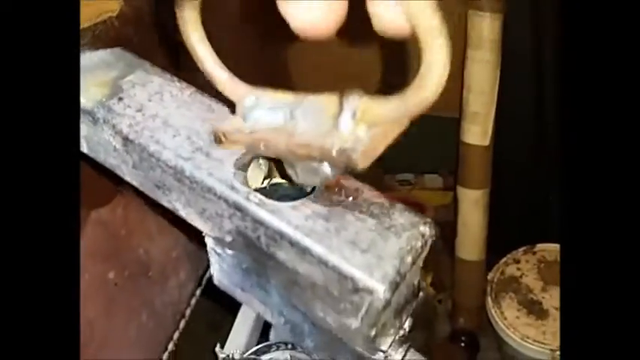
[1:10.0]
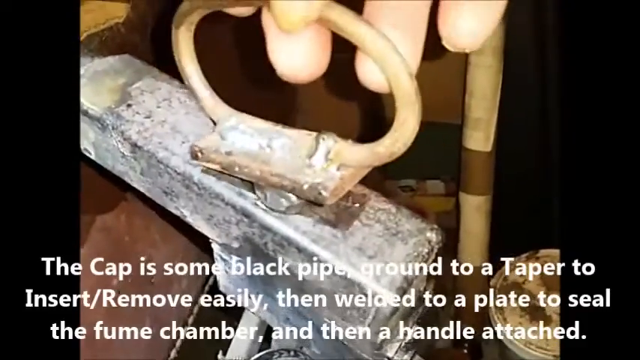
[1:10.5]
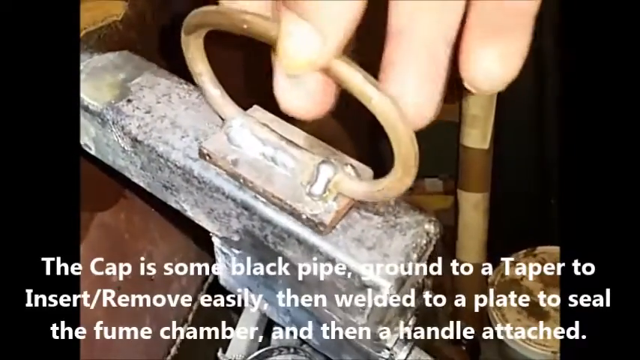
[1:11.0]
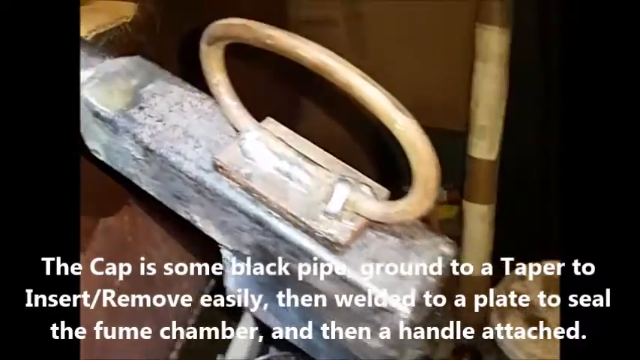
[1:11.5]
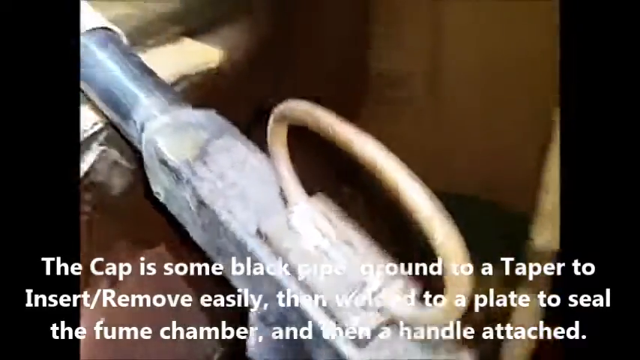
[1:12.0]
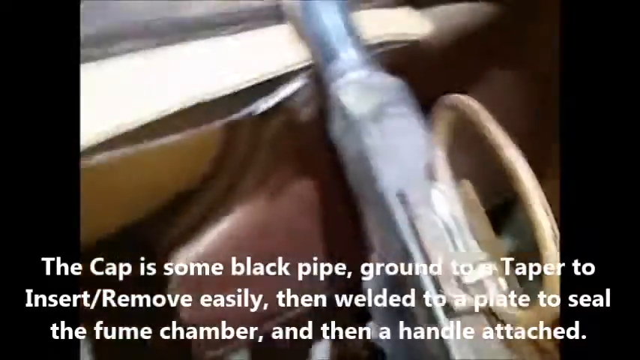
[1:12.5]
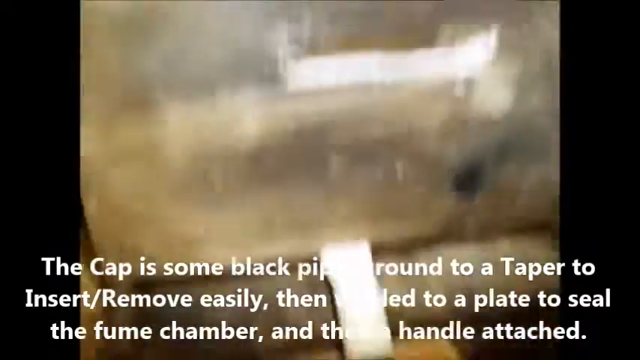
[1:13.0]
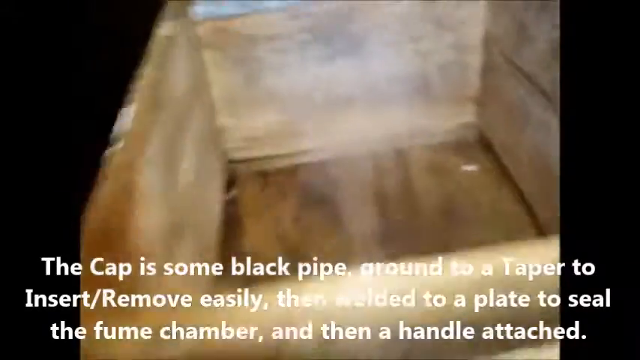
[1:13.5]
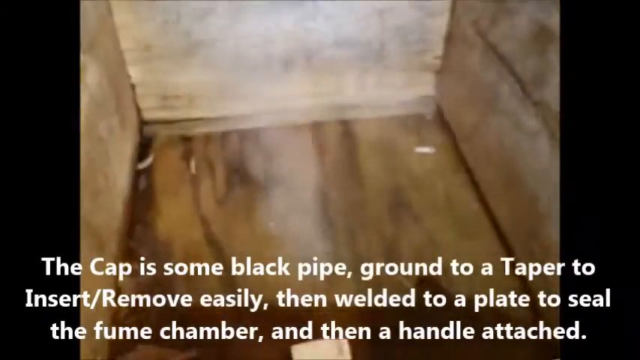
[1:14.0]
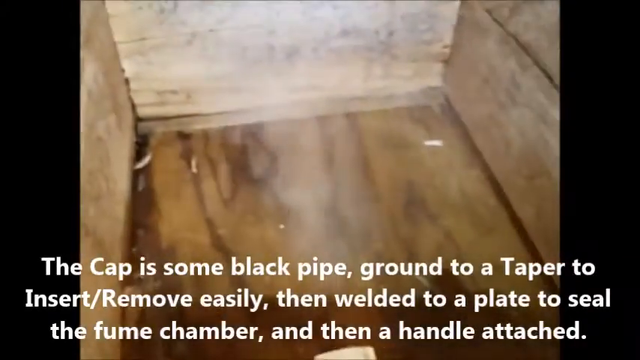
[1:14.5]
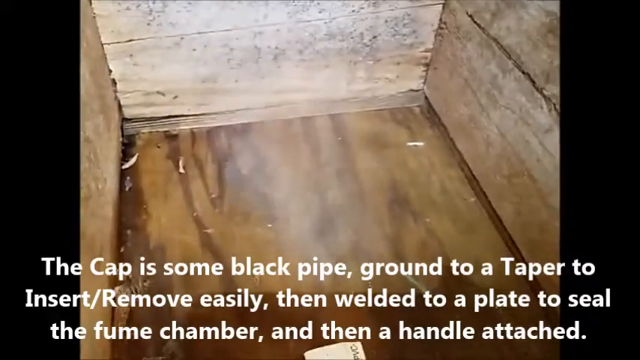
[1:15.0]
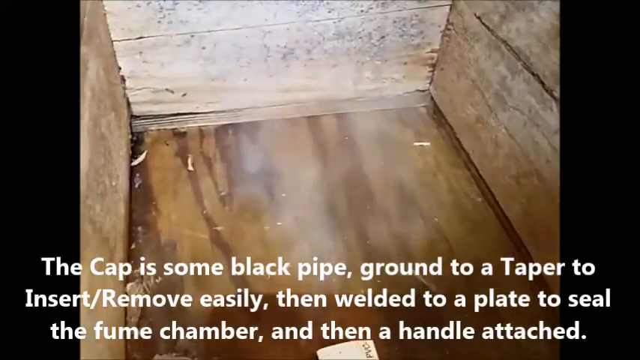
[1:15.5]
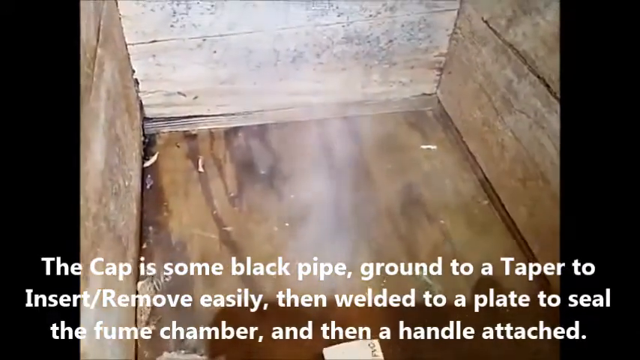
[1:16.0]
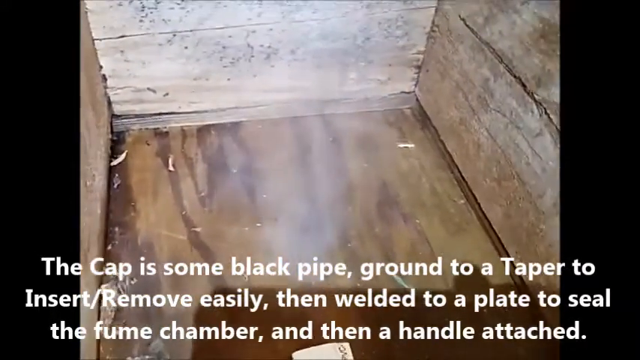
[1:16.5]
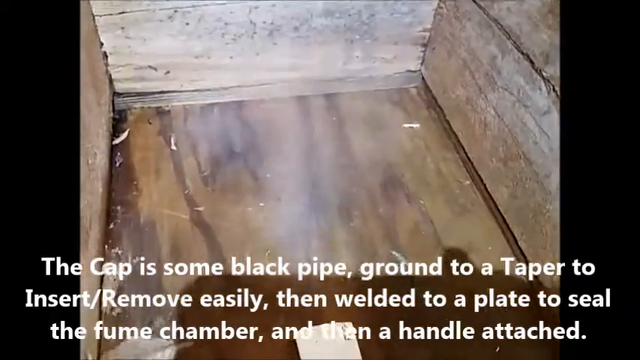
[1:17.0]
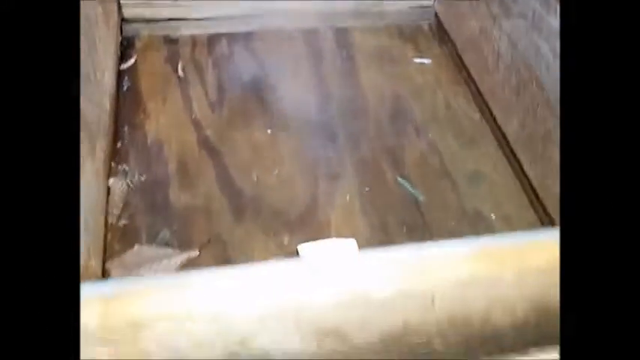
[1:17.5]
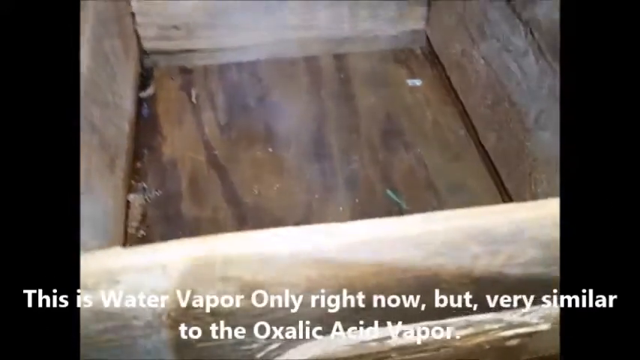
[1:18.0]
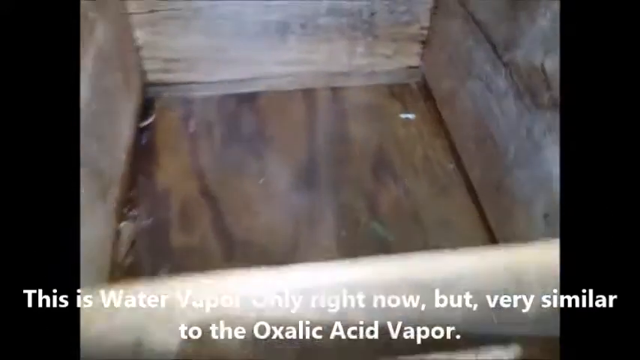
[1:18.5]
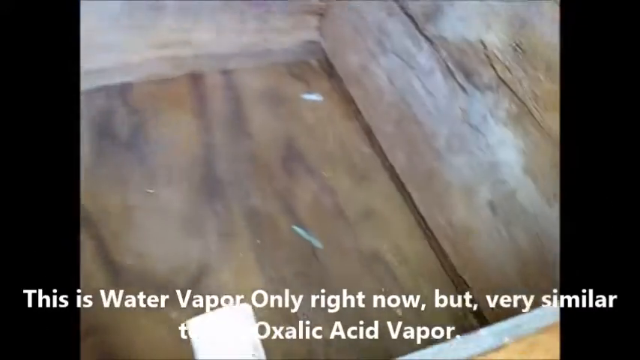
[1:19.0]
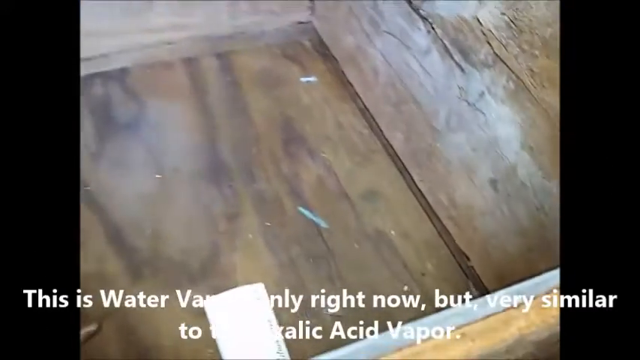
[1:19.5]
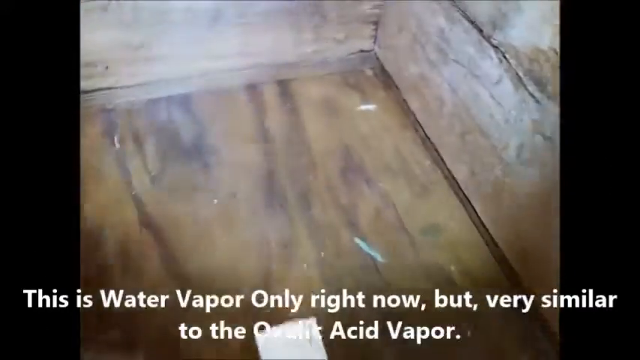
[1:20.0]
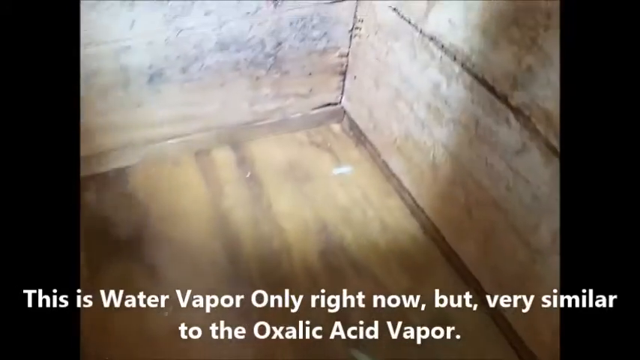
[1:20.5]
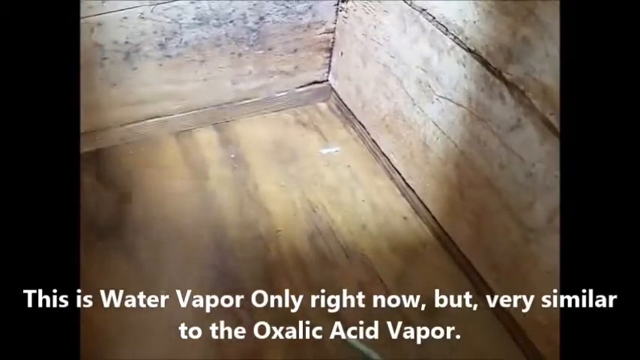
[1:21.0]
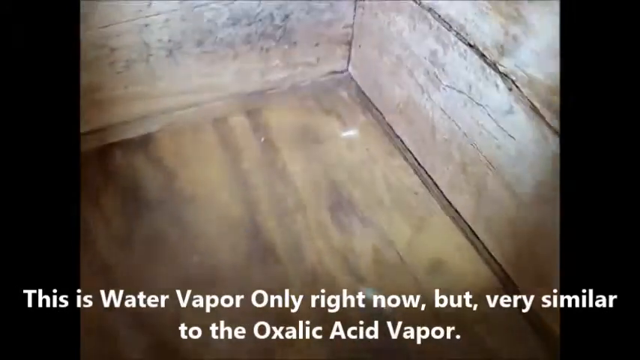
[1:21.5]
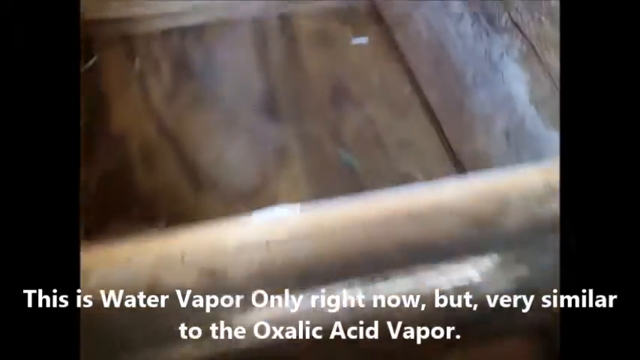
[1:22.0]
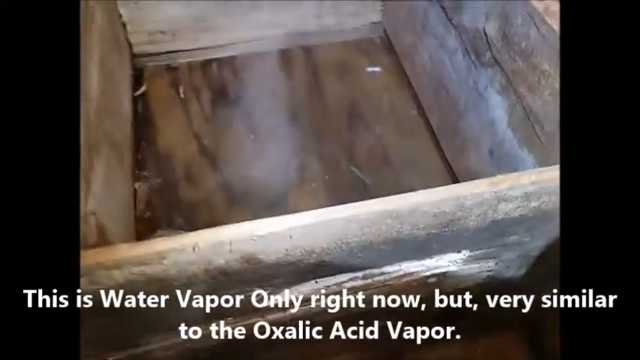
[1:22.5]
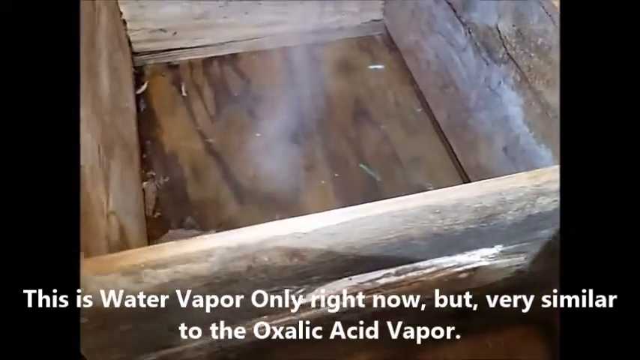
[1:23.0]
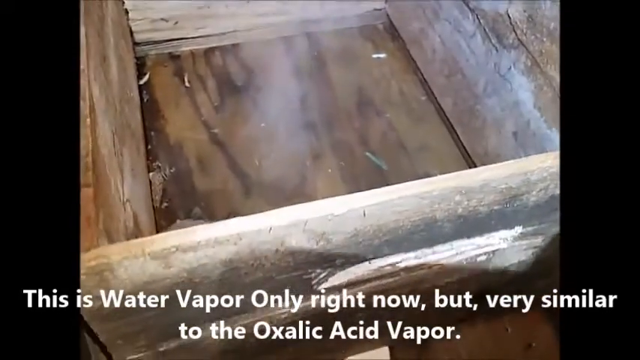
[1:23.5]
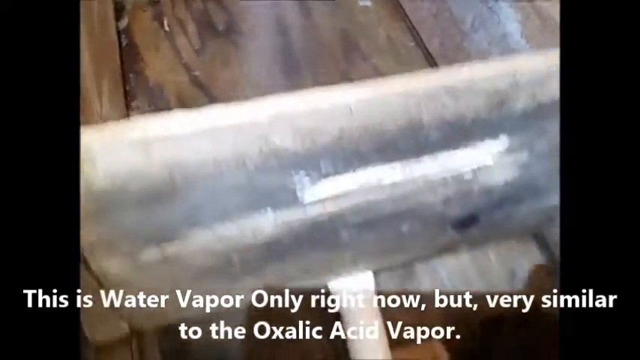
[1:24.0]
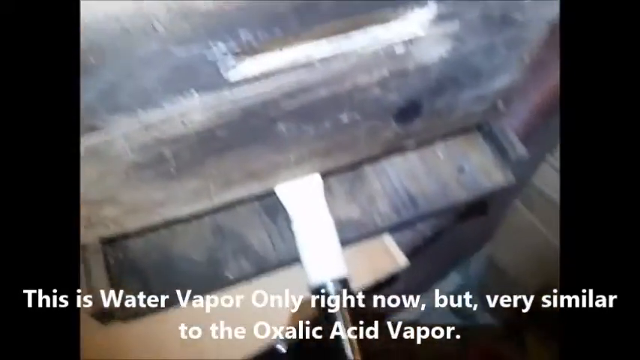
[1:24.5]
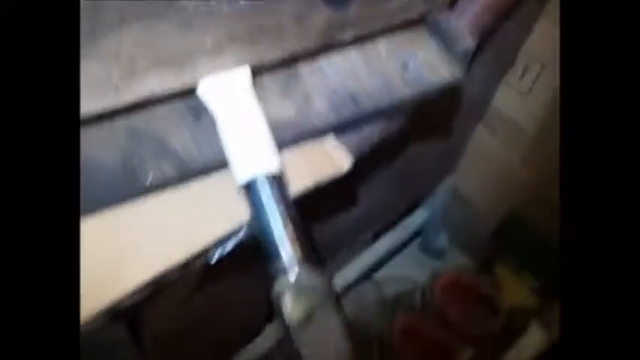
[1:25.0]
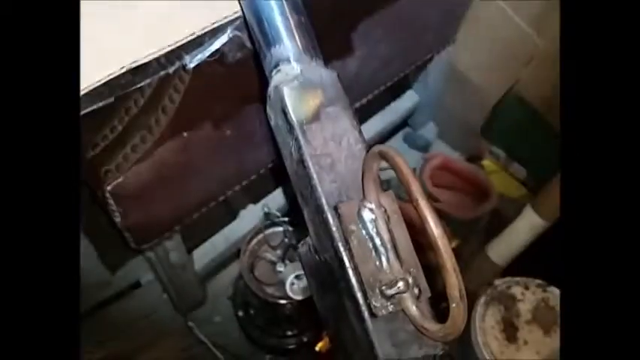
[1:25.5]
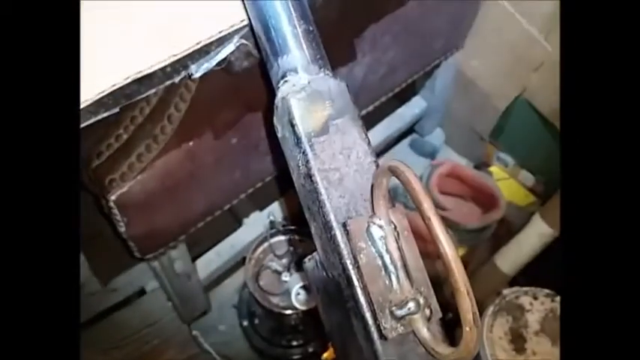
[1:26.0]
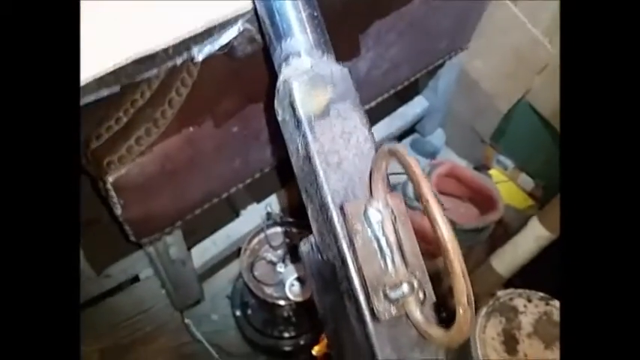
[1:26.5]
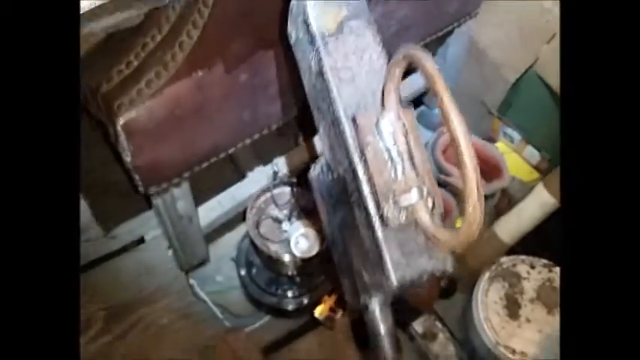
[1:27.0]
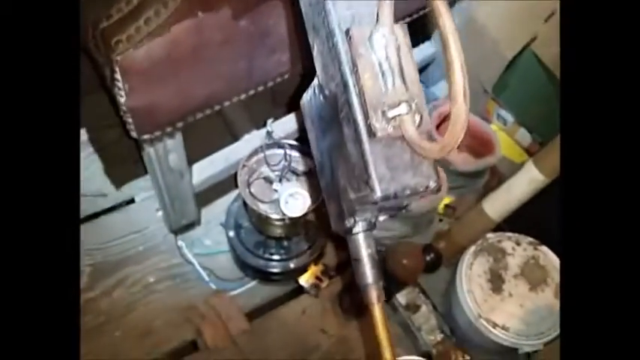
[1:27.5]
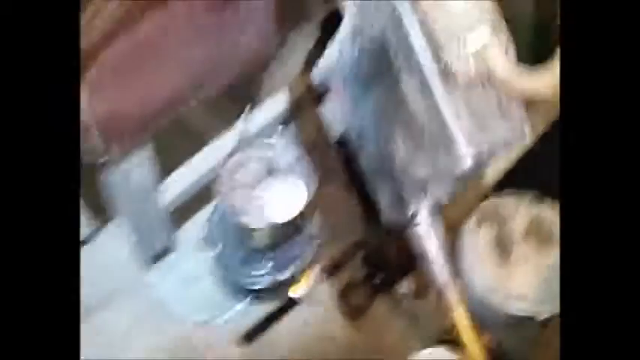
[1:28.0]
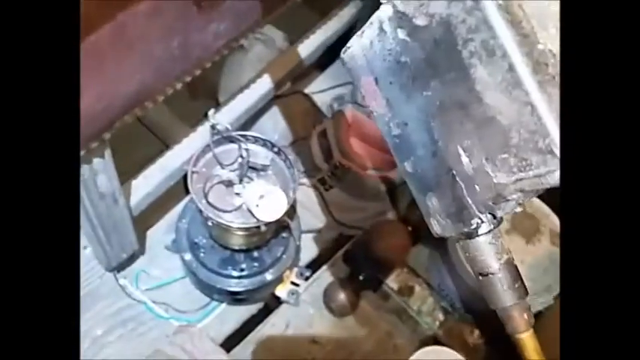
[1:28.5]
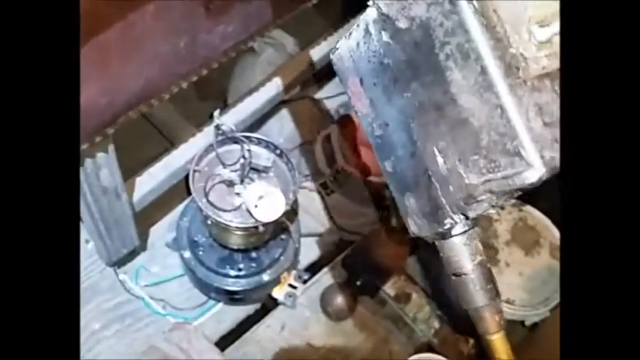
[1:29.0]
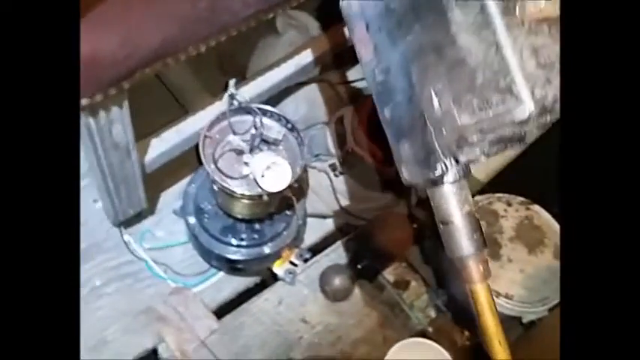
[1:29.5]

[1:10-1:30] The man puts the circular piece, a cap, back into the circle at the top of the pipe, where the water is visible, fitting it back in. The subtitles include "the cap is some black pipe" and "welded to a plate to seal the fume chamber and then a handle attached." The camera pans over to the inside of the box seen at the beginning; it is an older box that looks like it was put together by someone. The pipe is pushing some type of smoky substance into the box at the bottom. Text reads "this is water vapor only right now, but very similar to the oxalic acid vapor." The outside of the box is shown again, and the camera pans down to the floor and what is underneath on it.